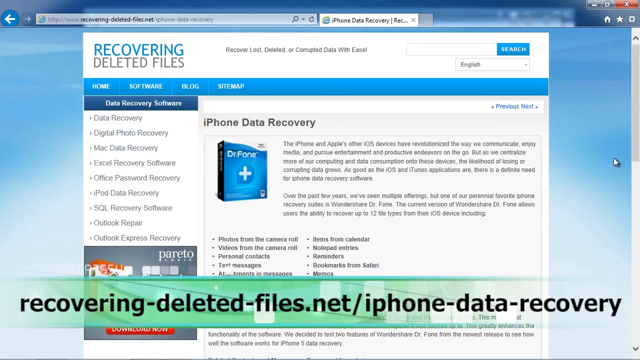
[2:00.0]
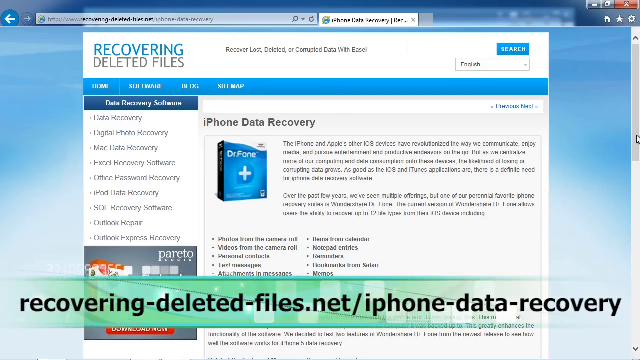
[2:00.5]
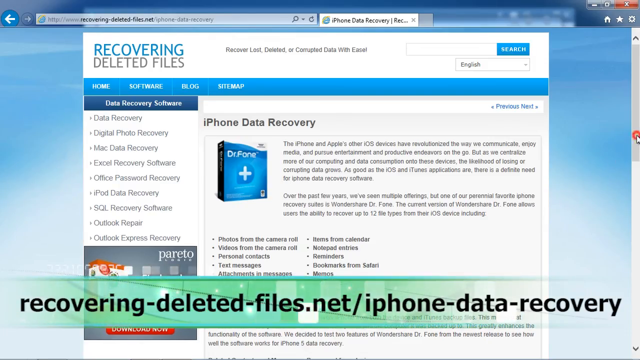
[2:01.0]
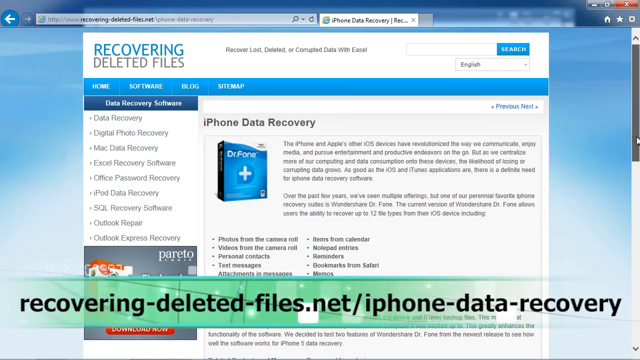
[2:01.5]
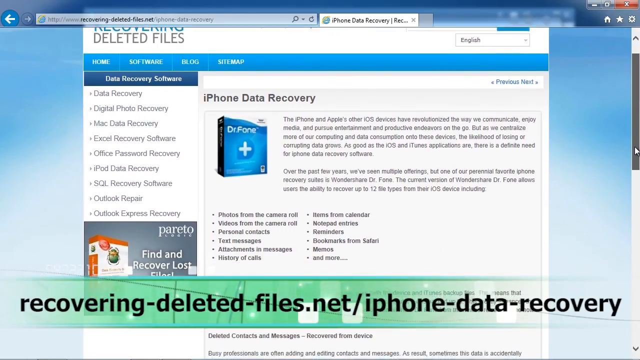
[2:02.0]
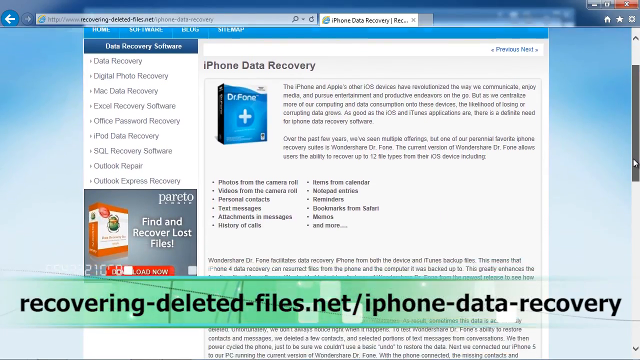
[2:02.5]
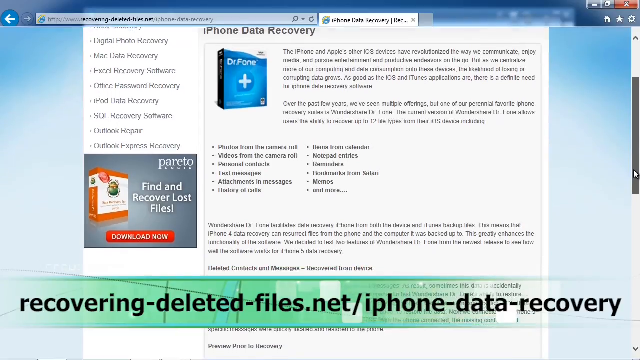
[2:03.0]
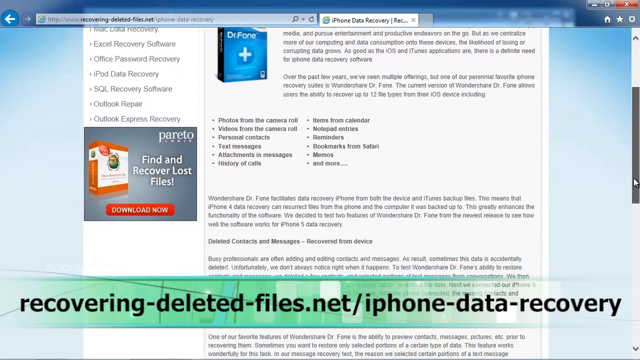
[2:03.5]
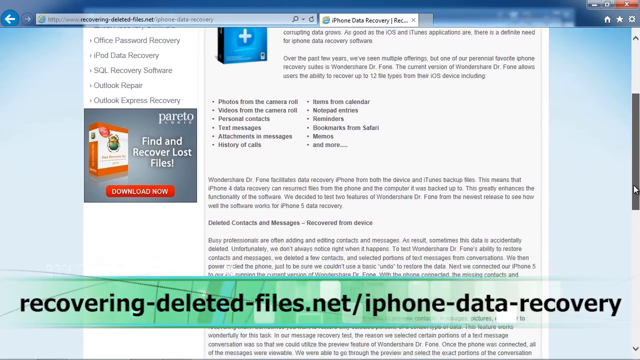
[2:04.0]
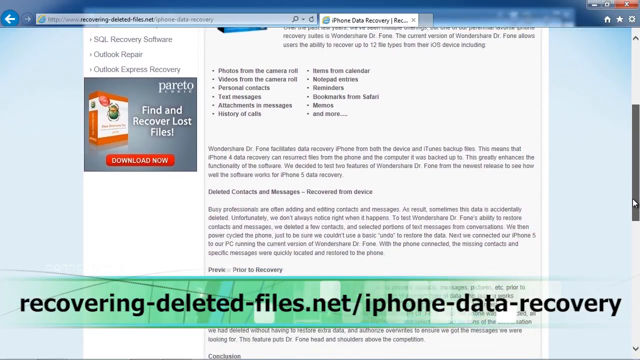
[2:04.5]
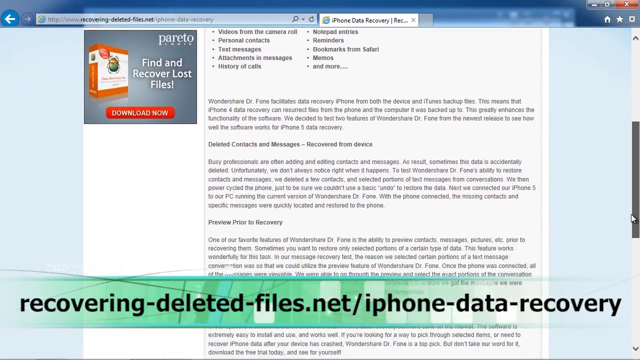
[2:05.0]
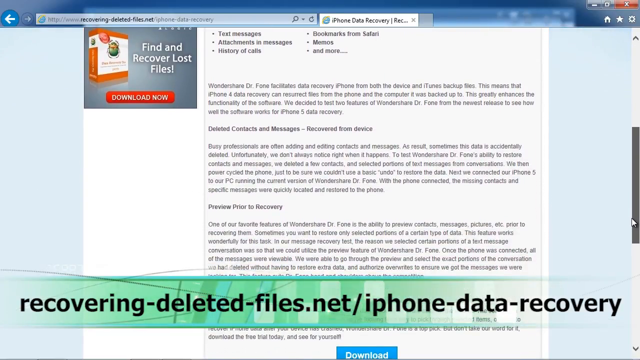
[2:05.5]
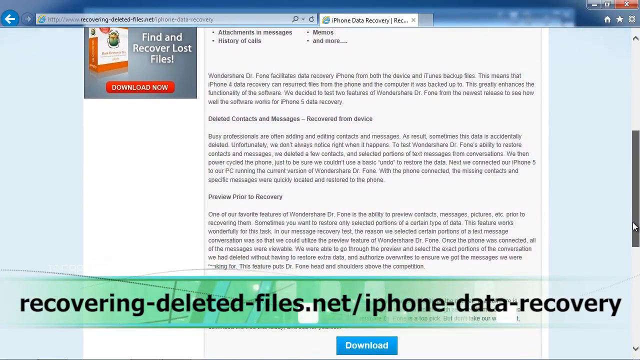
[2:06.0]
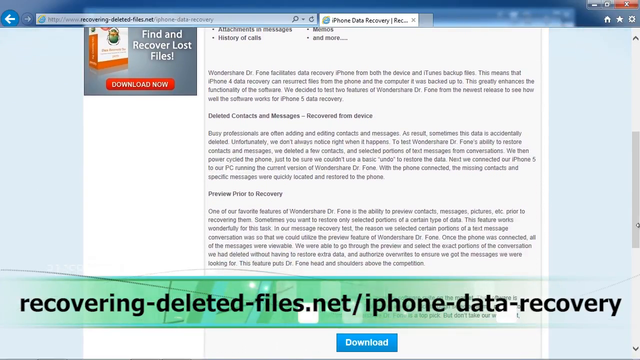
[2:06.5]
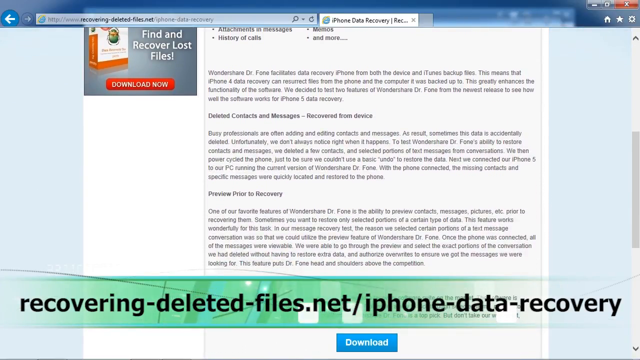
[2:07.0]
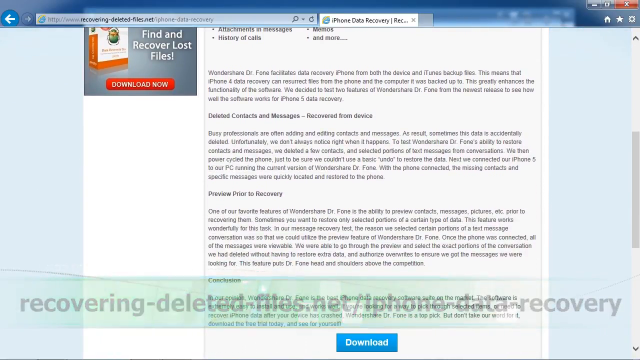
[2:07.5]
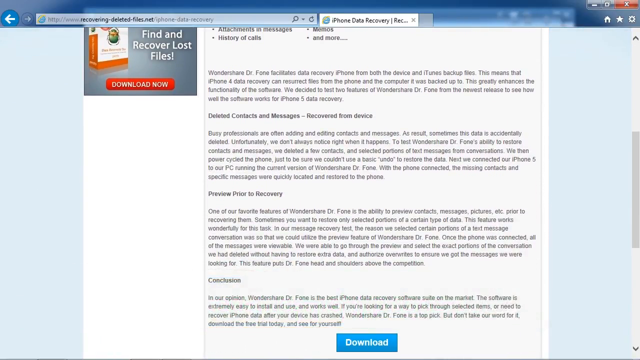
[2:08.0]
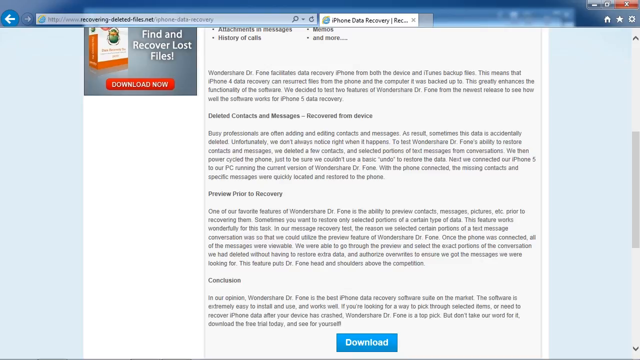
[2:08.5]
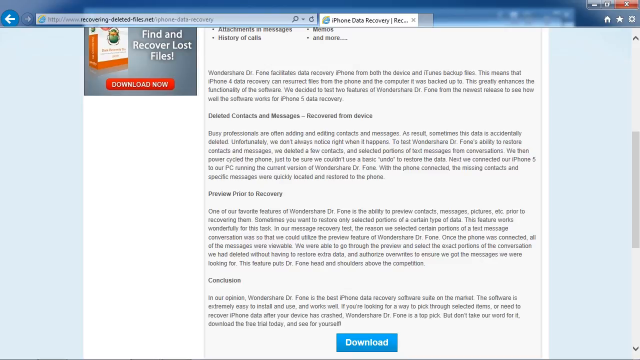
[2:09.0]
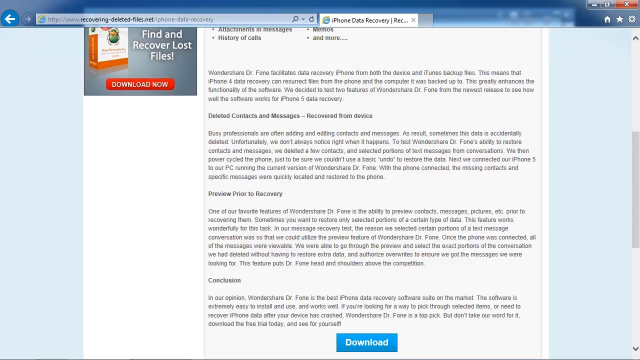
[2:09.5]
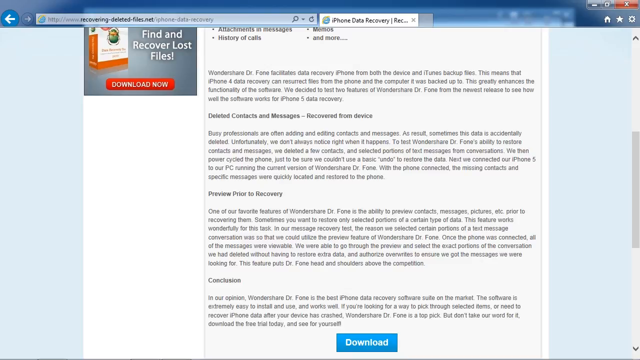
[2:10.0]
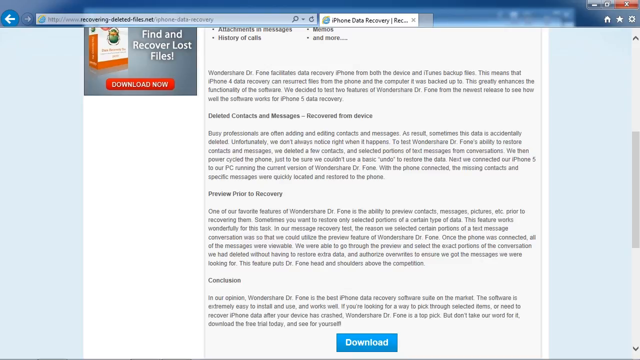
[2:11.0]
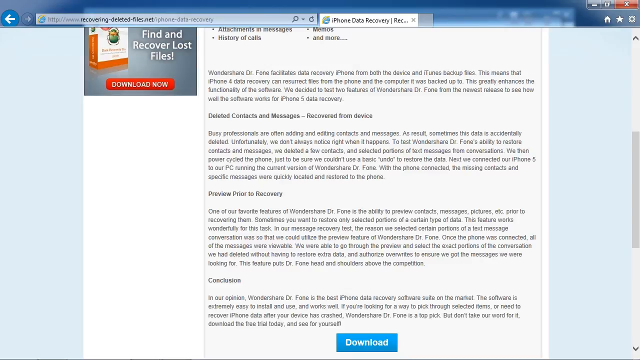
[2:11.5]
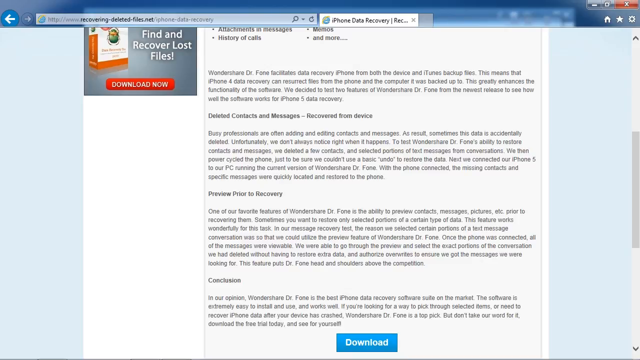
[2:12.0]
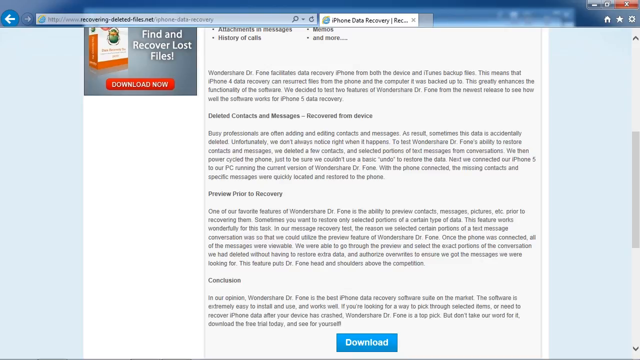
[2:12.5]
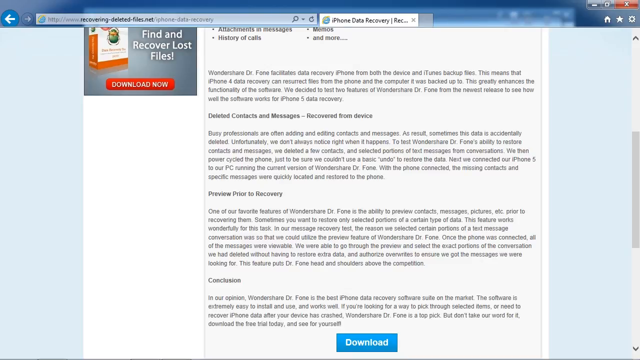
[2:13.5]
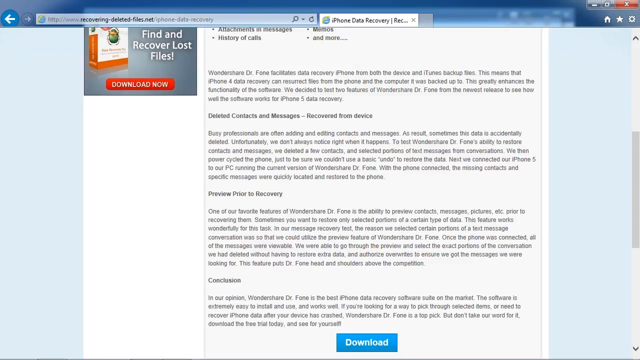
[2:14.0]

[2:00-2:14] The view apparently returns to the recovering deleted files.net page. There appear to be a few options under data recovery software, and under iPhone data recovery it shows the Dr. Phone option. The user scrolls down, revealing paragraphs explaining what Dr. Phone does for a user.